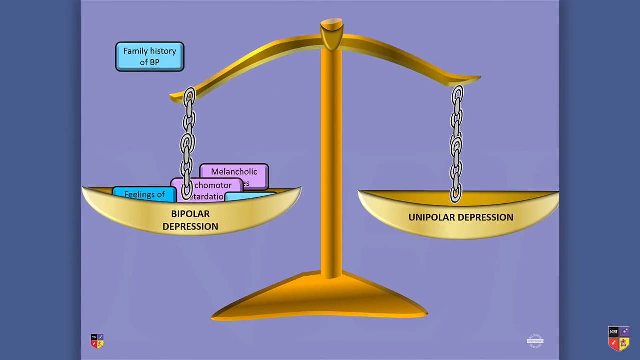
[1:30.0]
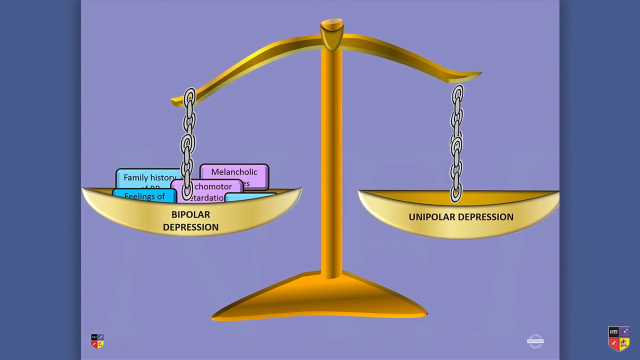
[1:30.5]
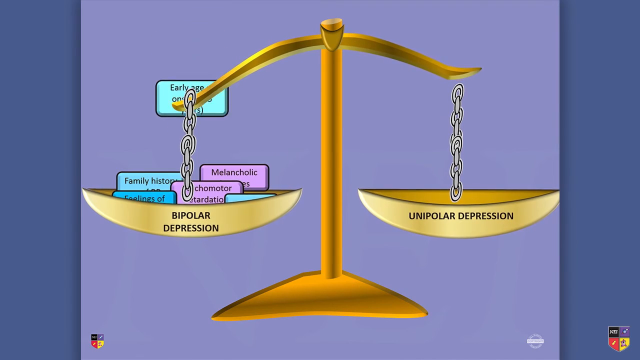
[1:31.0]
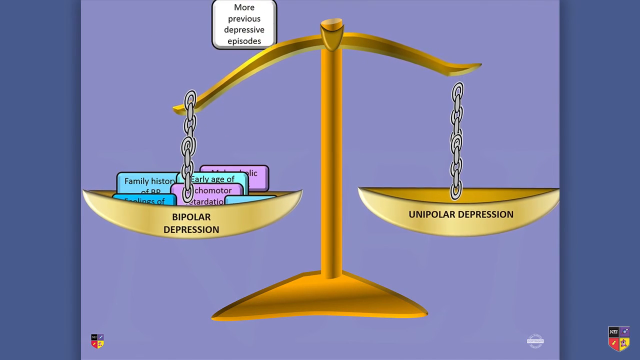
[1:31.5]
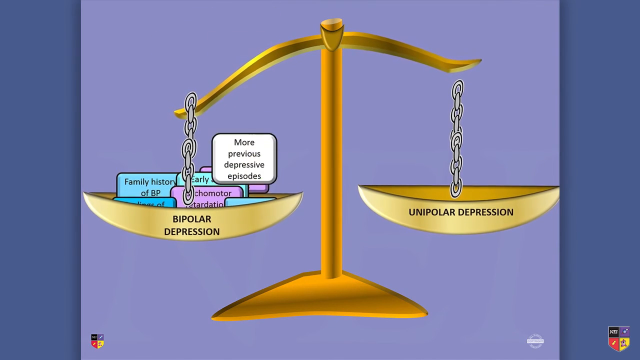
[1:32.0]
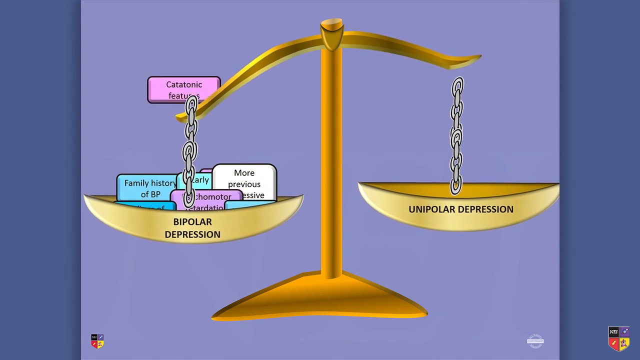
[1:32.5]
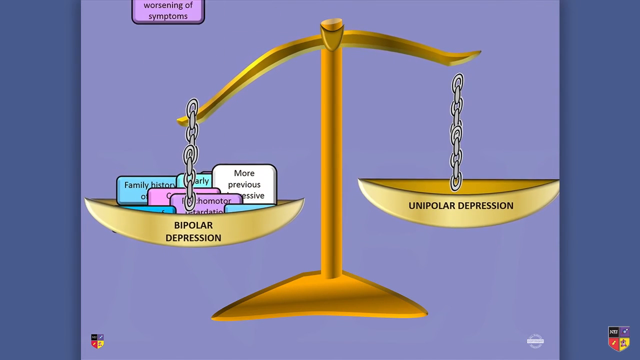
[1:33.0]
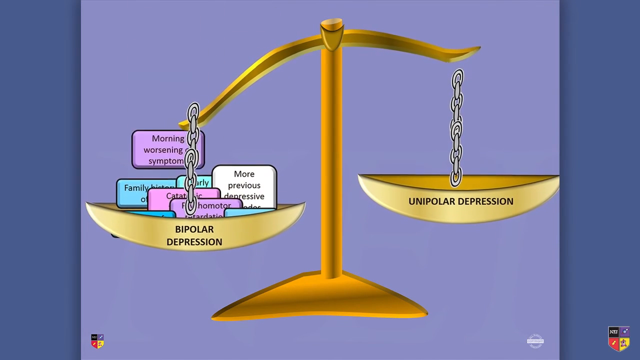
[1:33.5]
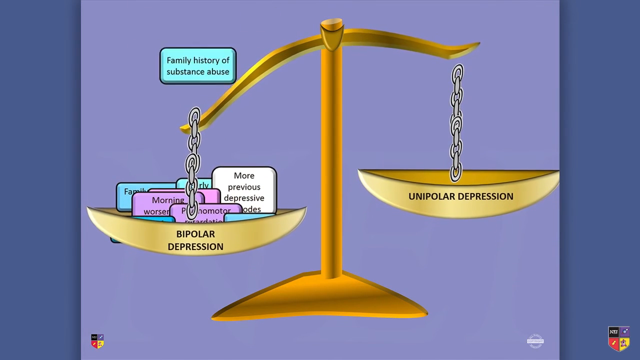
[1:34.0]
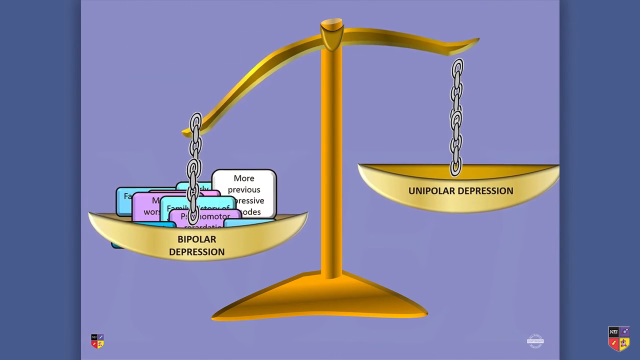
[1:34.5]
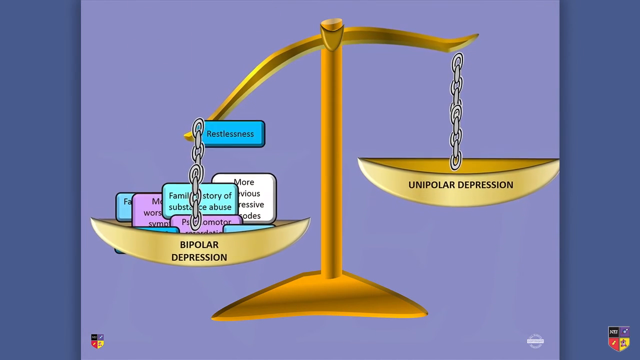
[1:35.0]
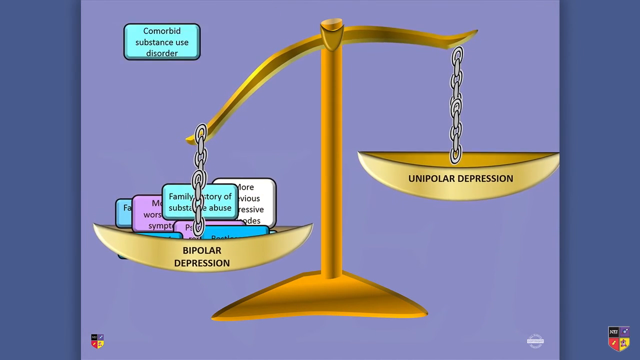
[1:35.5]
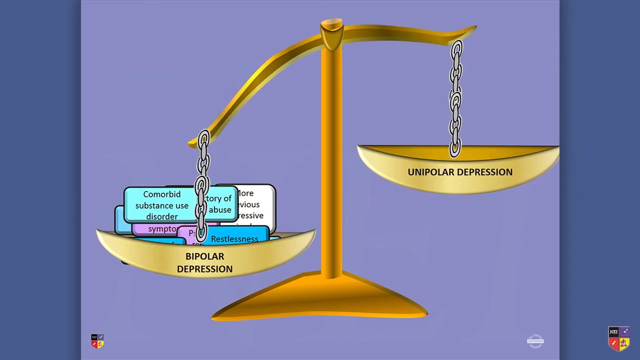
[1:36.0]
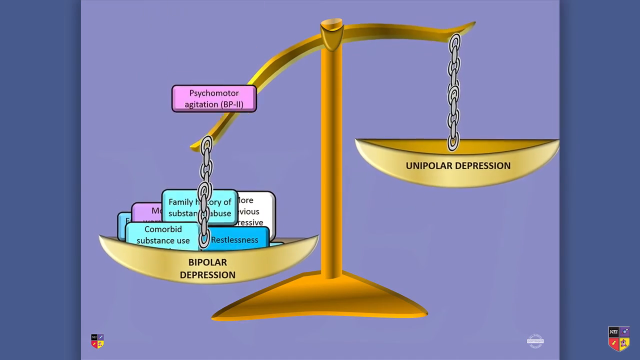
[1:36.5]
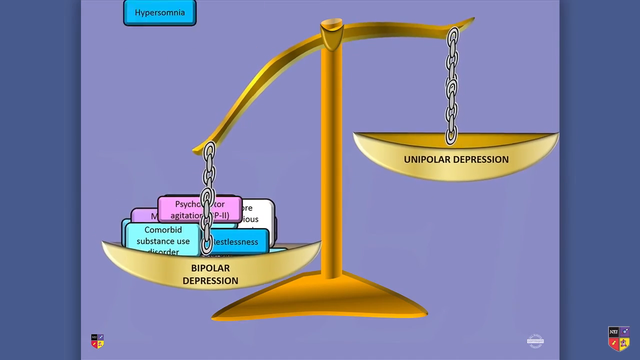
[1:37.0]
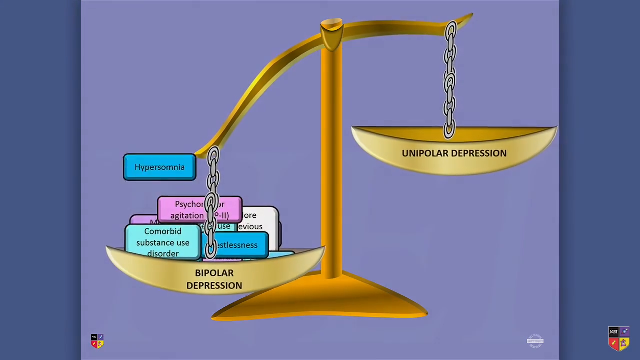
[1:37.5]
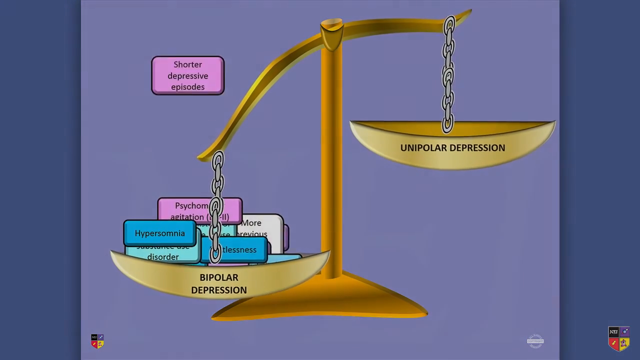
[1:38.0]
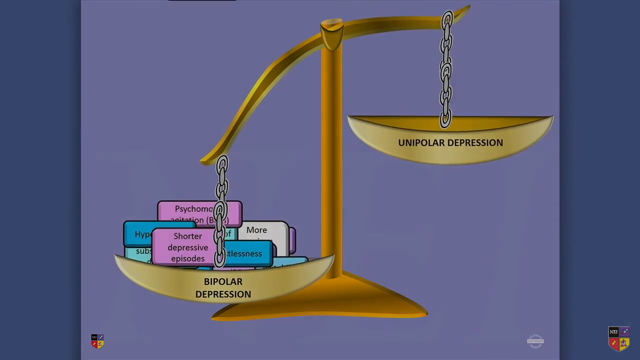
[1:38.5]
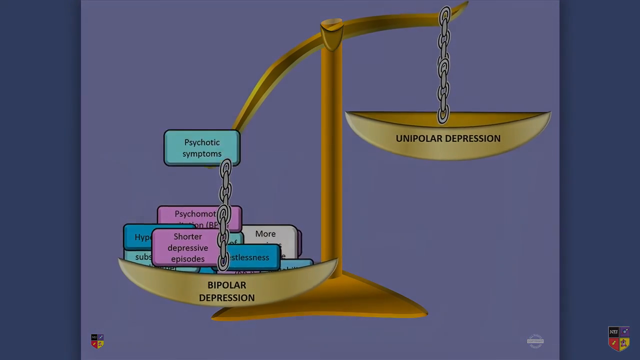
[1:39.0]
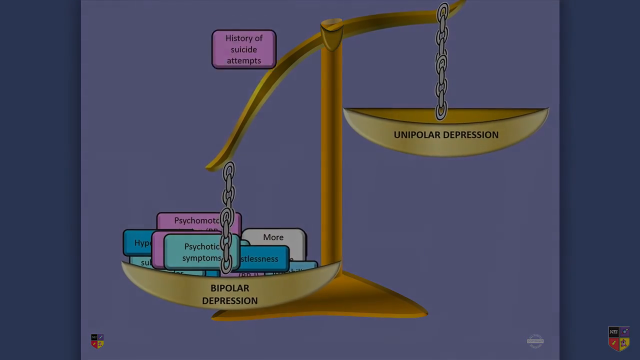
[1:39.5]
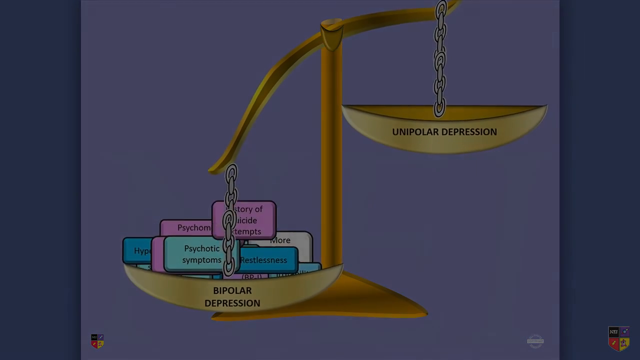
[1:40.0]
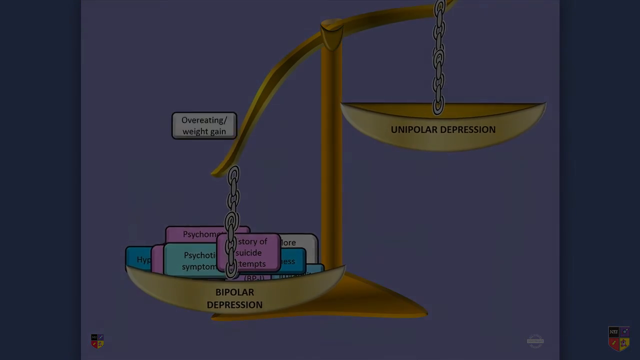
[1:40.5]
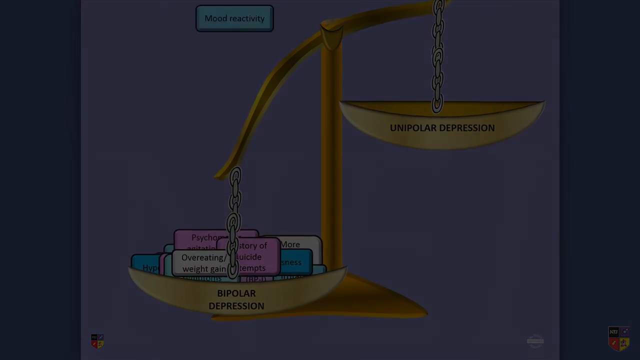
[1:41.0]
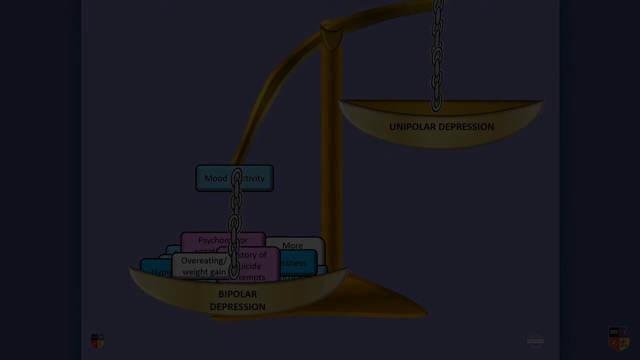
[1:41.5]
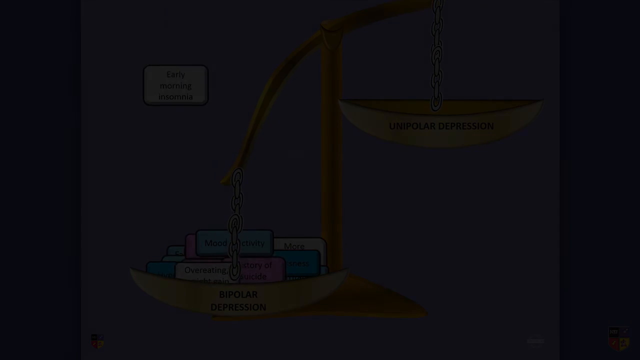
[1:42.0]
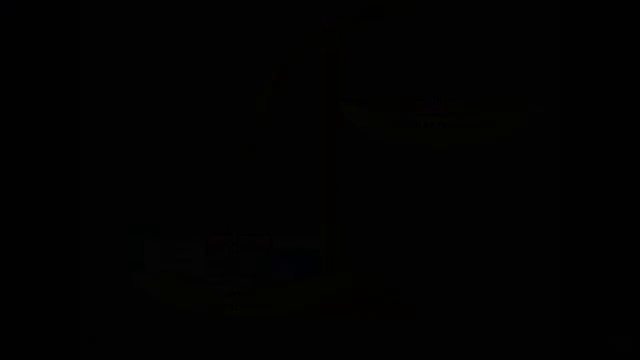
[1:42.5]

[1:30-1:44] A slide shows a weight scale with two sides, bipolar depression and unipolar depression. Blocks fall into the bipolar side of the scale, and as they fall, that side goes down, weighed down by them. Family history of bipolar falls in, then more previous depression episodes, followed by blocks for morning worsening symptoms, family history of abuse, restlessness, substance abuse disorder, and shorter depression episodes. As more and more blocks fall, the unipolar depression side rises higher and the bipolar depression side sinks lower. It looks like the scene is getting darker and darker, as if the lights are kind of going out, while more and more blocks fall onto the bipolar side of the scale.